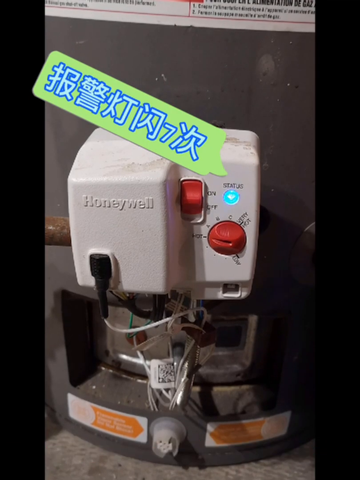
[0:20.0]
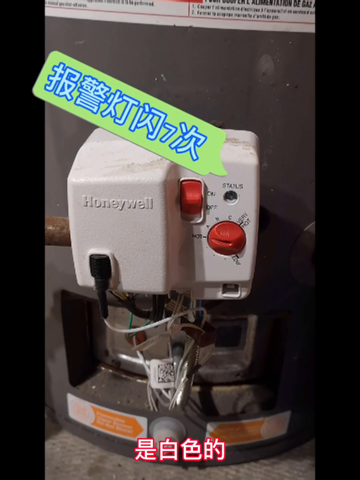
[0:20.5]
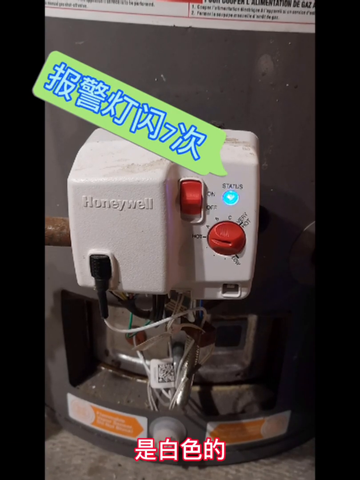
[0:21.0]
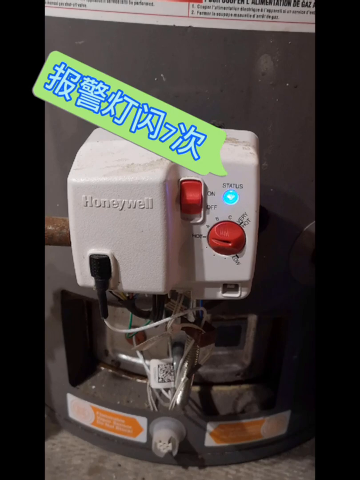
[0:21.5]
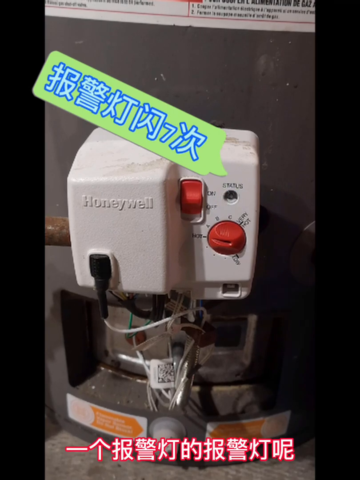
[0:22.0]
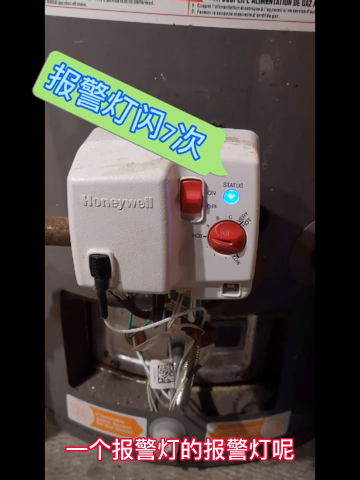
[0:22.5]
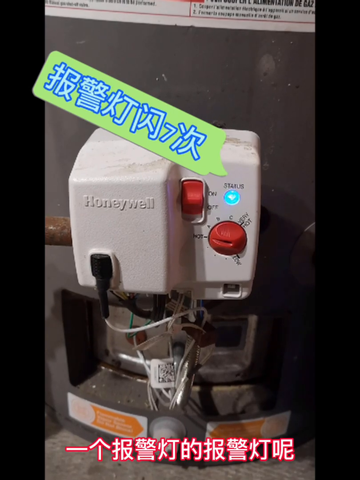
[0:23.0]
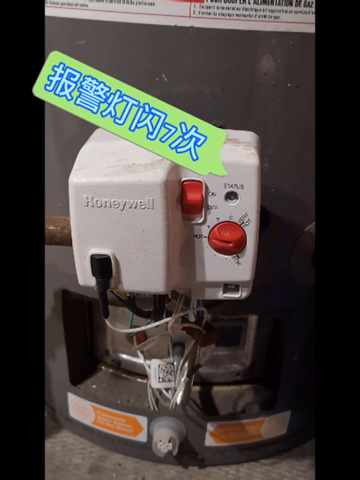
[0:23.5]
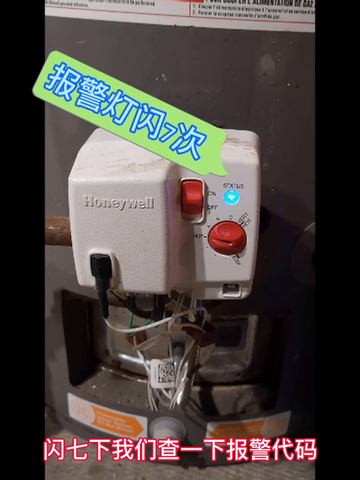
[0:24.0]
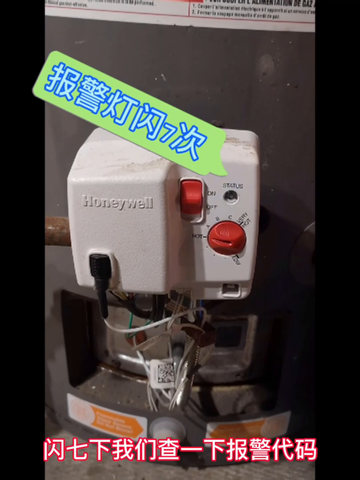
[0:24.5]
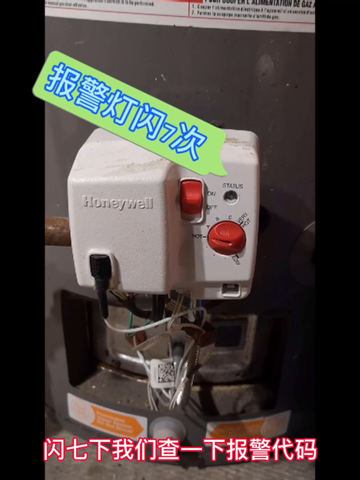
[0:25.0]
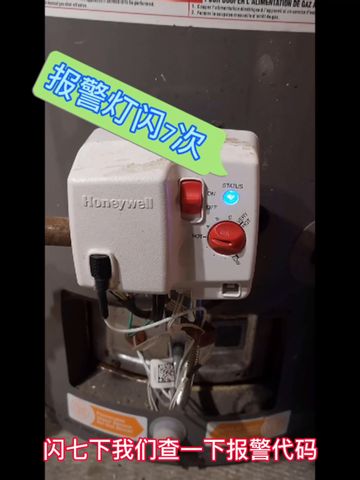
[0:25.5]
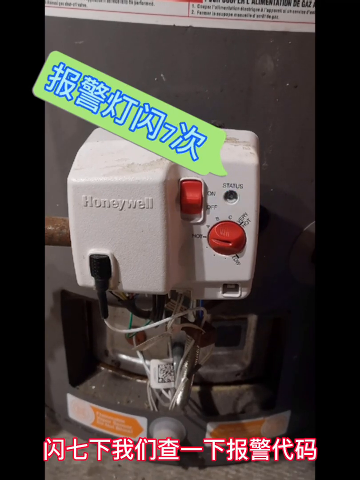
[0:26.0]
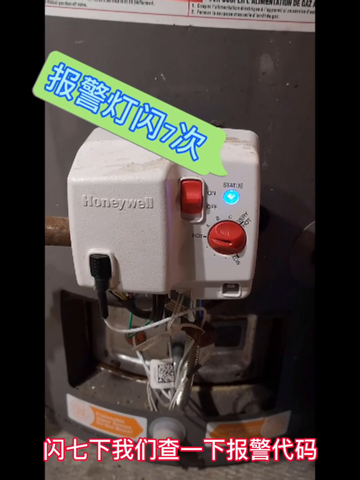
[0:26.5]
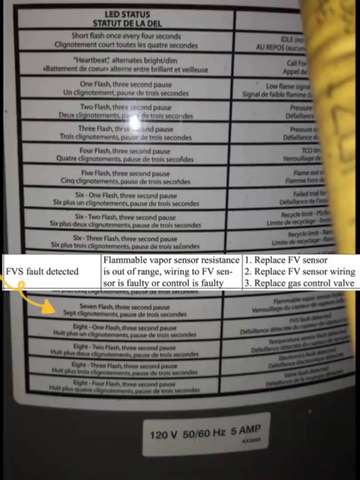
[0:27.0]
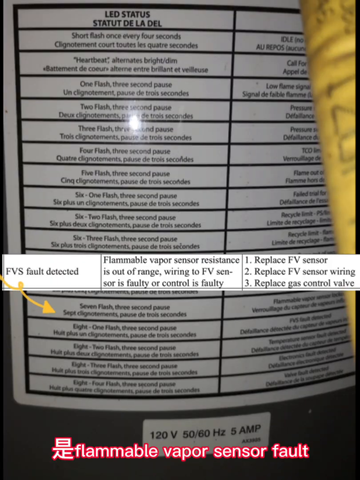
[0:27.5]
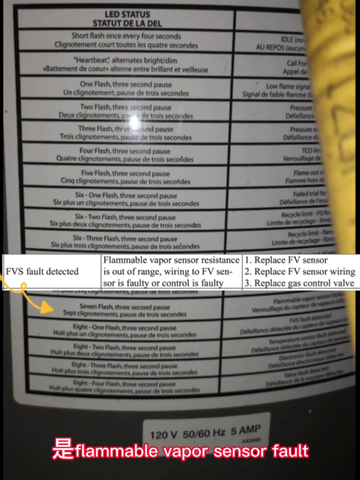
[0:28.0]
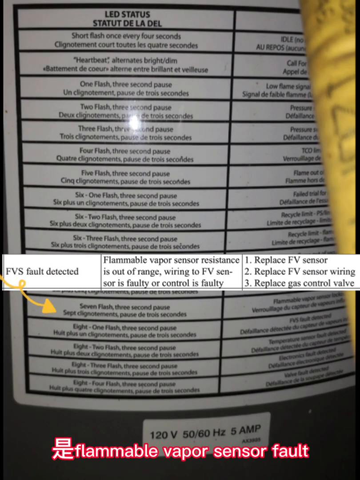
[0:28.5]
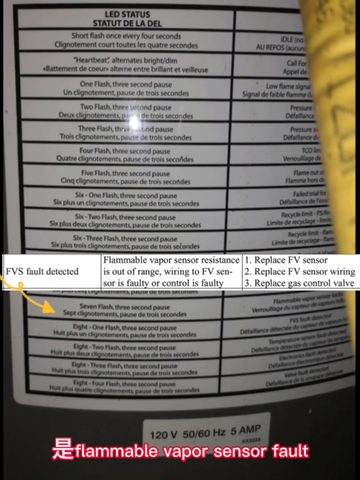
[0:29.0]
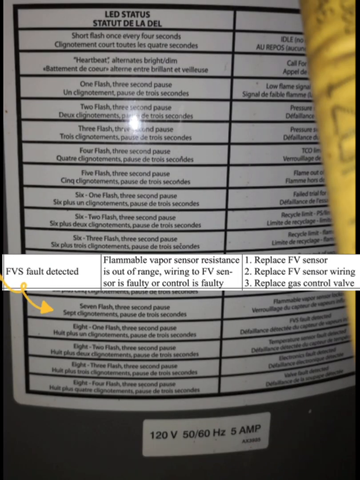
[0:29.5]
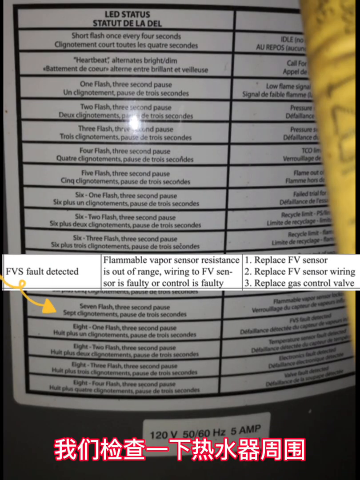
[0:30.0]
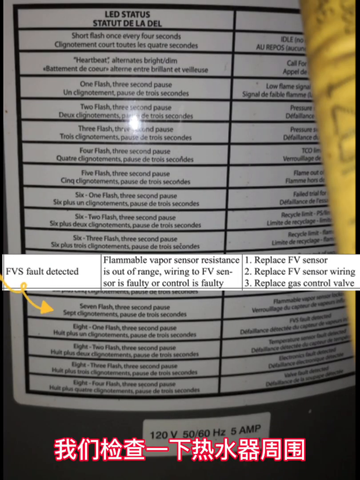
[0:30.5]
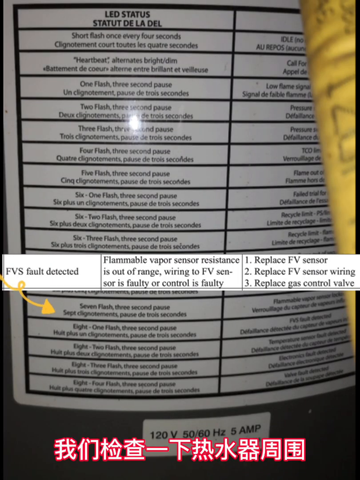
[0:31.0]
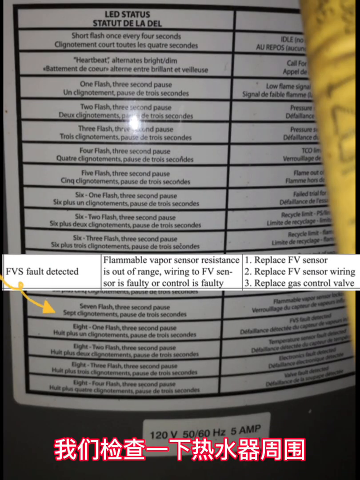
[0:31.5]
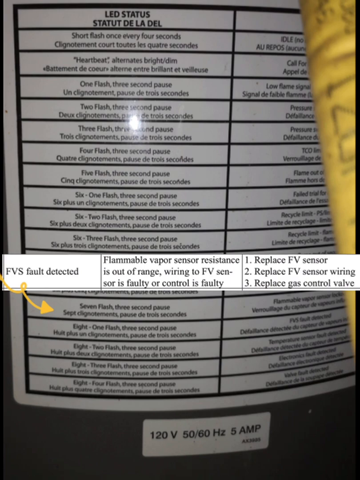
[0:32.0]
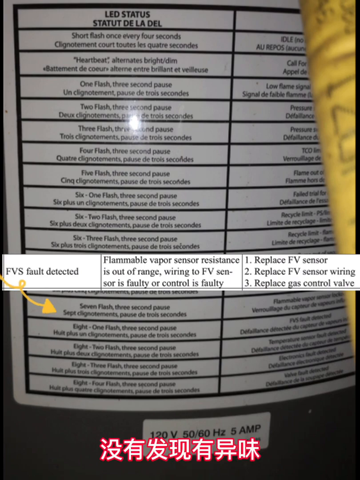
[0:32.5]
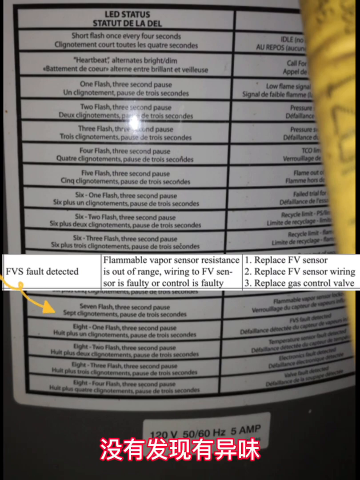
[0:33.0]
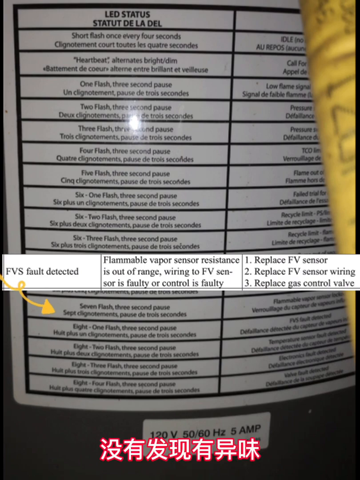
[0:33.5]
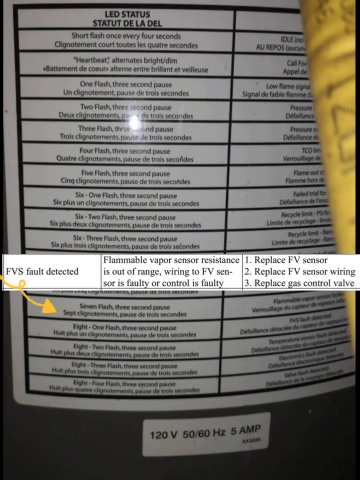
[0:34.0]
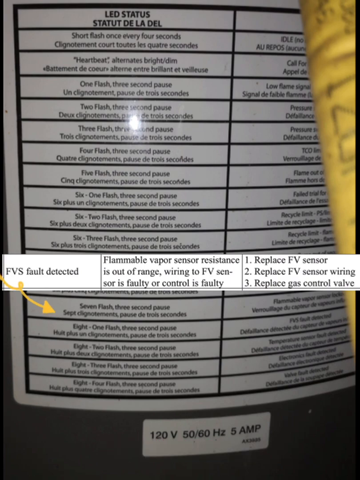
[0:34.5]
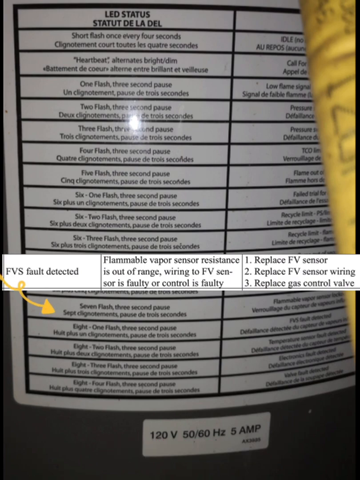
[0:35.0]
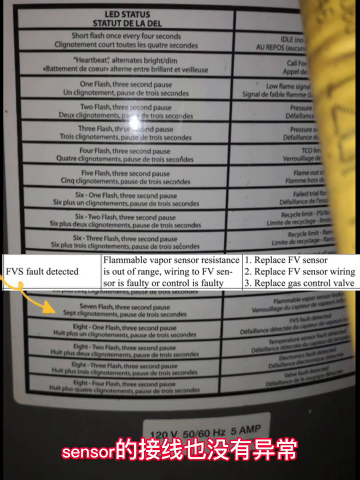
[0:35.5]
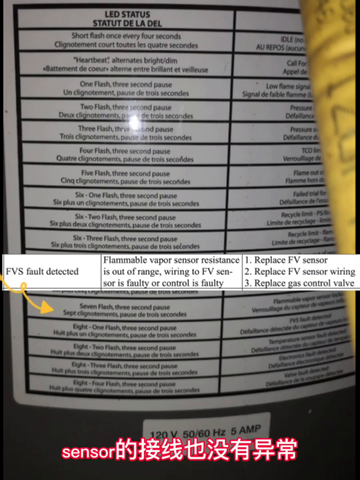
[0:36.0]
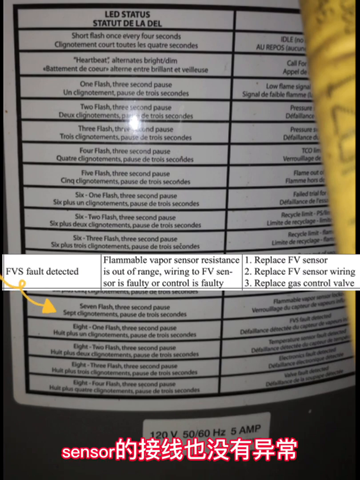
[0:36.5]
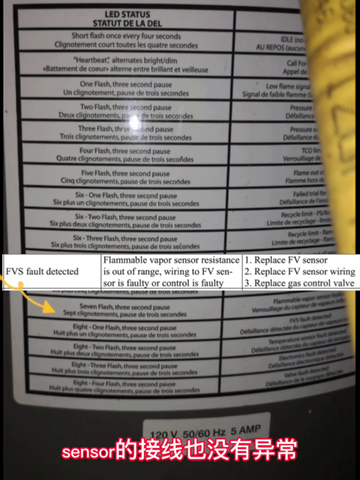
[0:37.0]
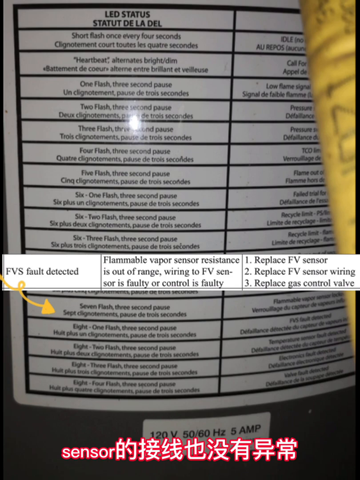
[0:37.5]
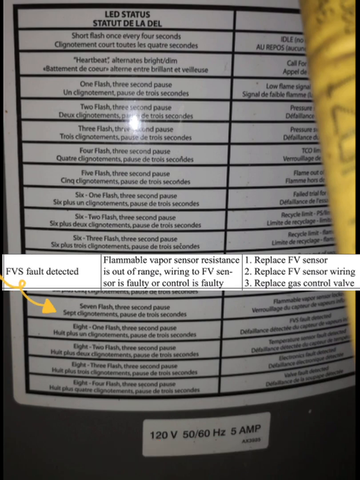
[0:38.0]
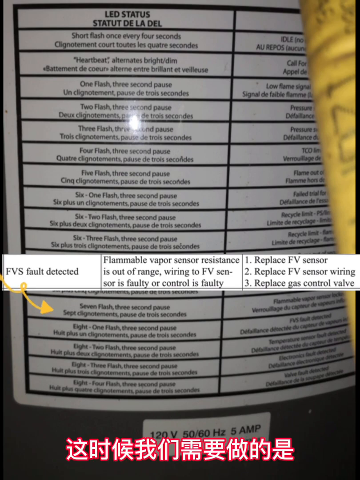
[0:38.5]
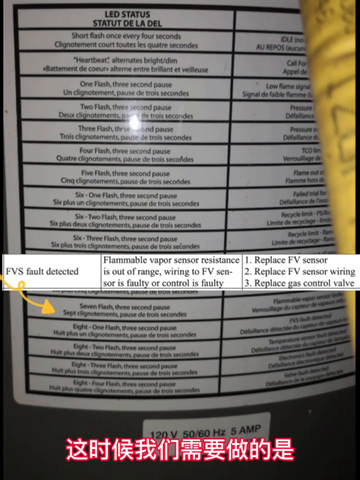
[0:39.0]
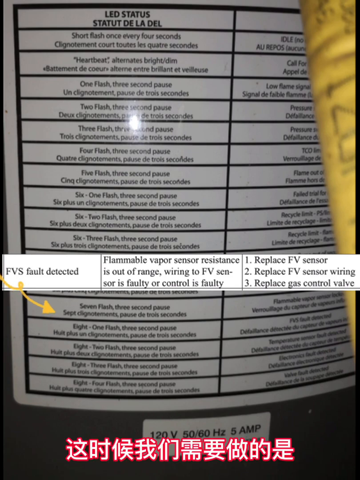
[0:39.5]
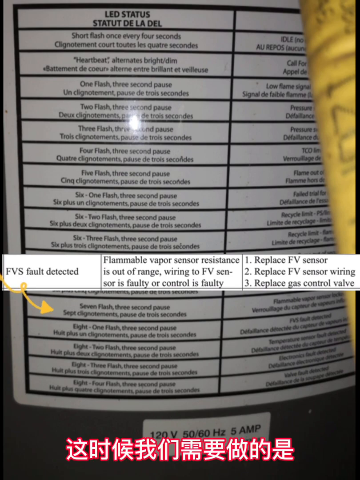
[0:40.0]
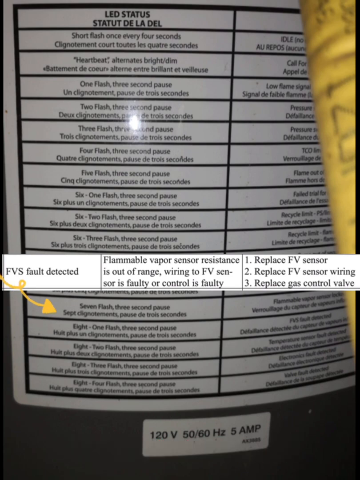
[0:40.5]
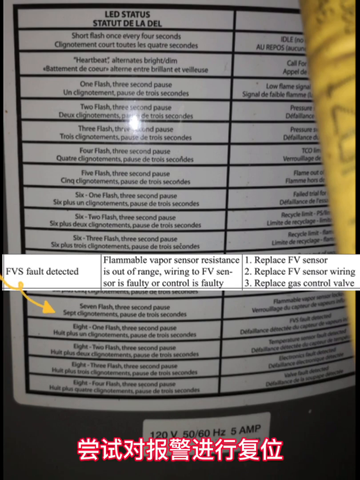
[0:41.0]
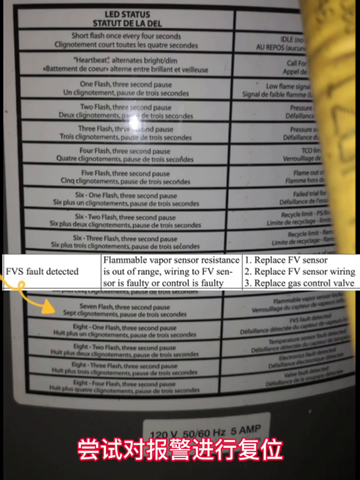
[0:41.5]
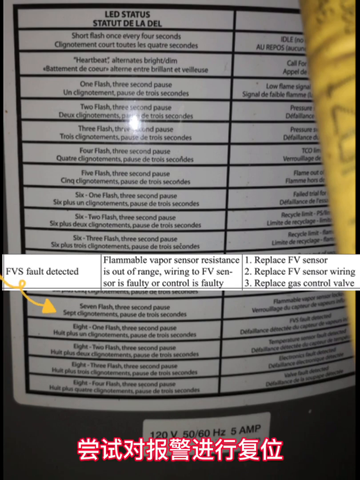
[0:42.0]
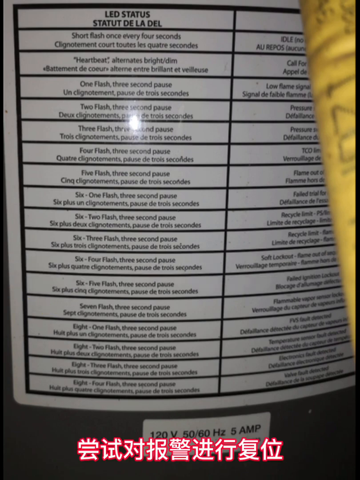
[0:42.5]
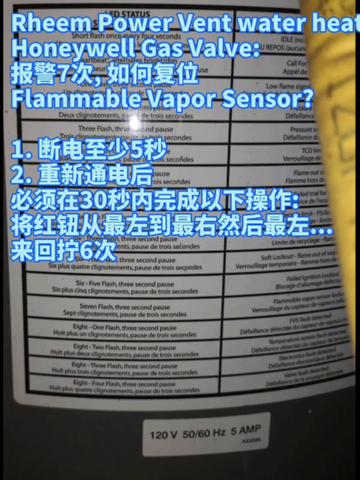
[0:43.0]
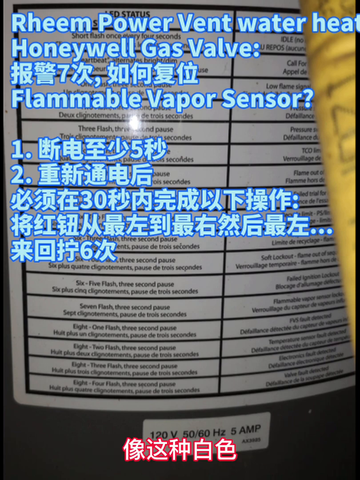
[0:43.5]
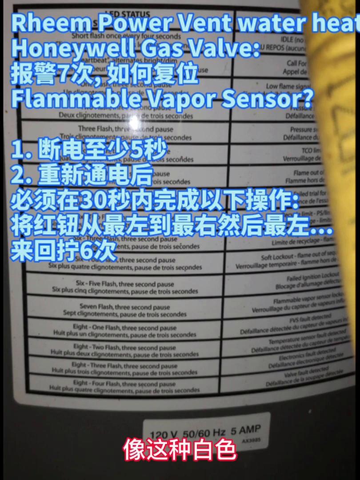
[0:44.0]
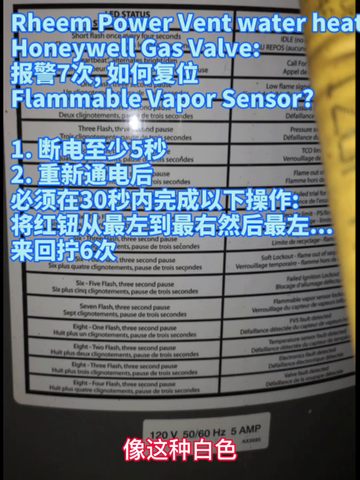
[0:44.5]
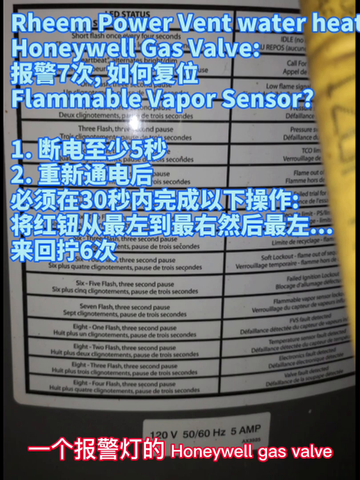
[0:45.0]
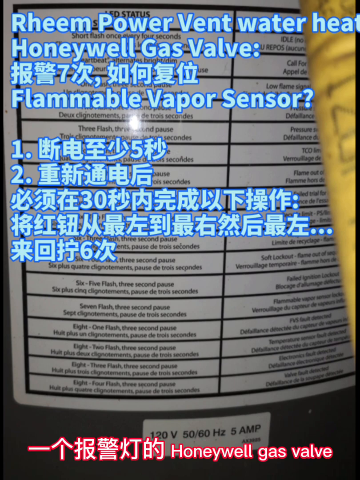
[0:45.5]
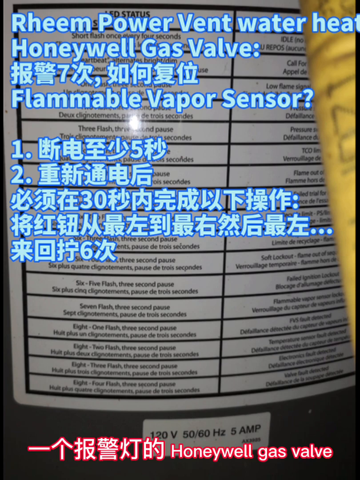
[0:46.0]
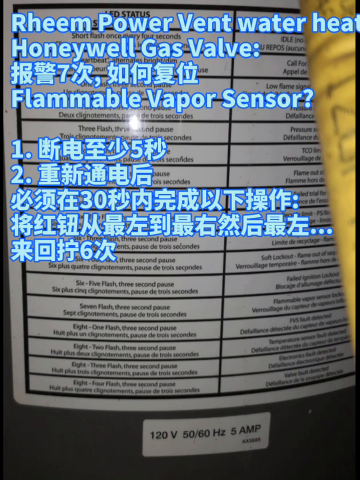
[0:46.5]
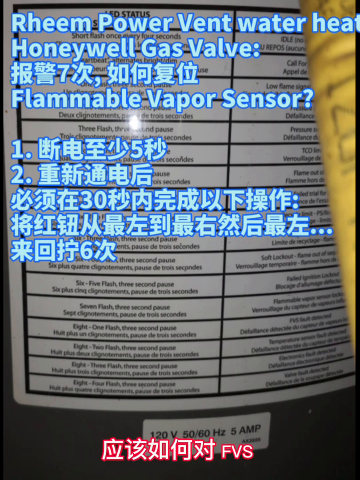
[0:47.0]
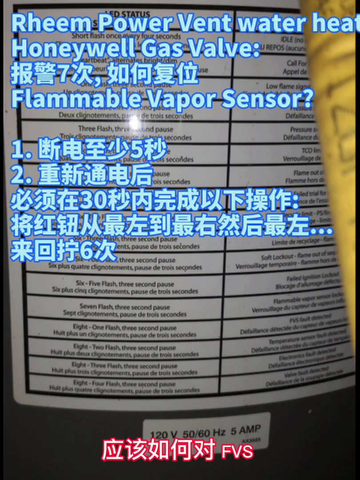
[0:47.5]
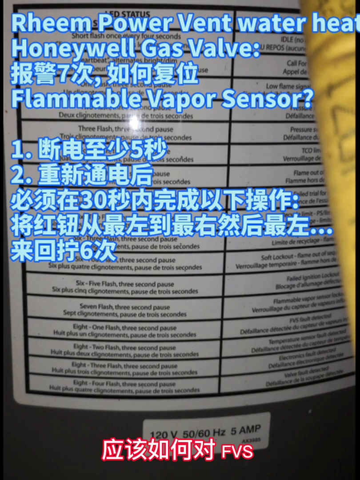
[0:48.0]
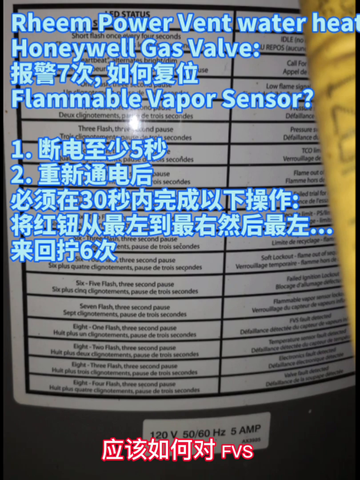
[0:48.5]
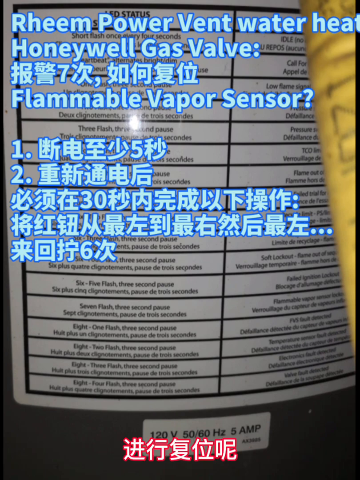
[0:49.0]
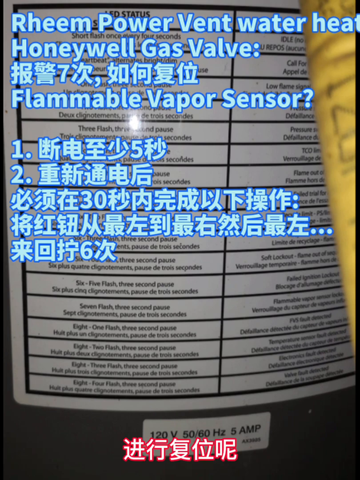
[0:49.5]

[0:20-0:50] The video continues with the gas valve on the water heater, showing an error code, "FBS fault detected," apparently a fault that can happen with the water heater. The error codes relate to status lights on the gas valve.